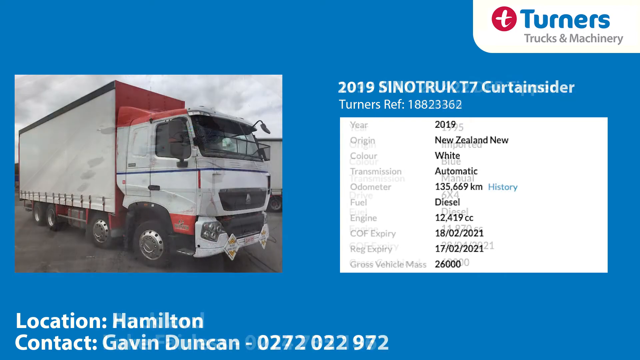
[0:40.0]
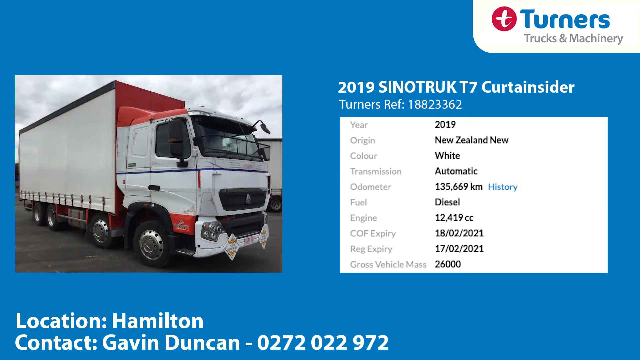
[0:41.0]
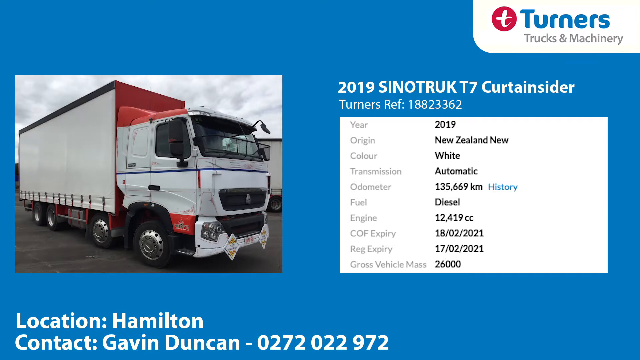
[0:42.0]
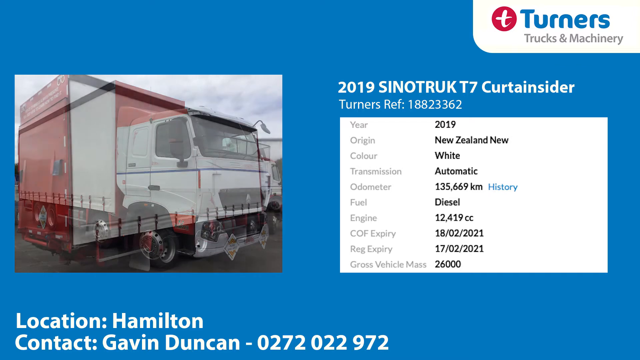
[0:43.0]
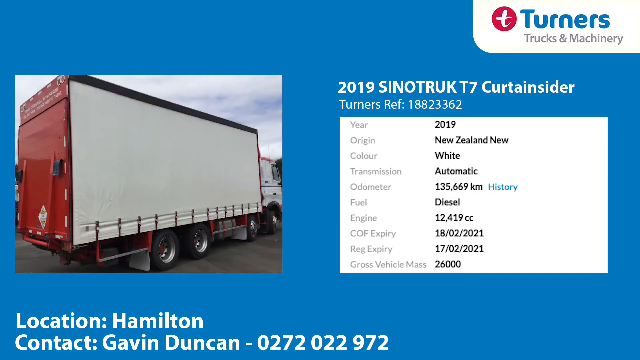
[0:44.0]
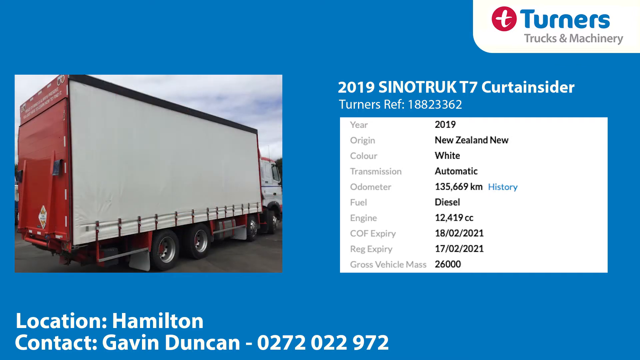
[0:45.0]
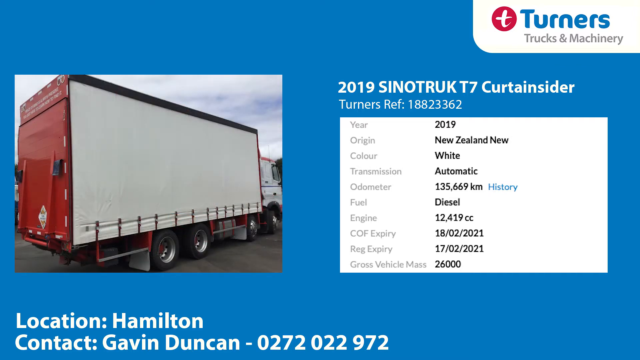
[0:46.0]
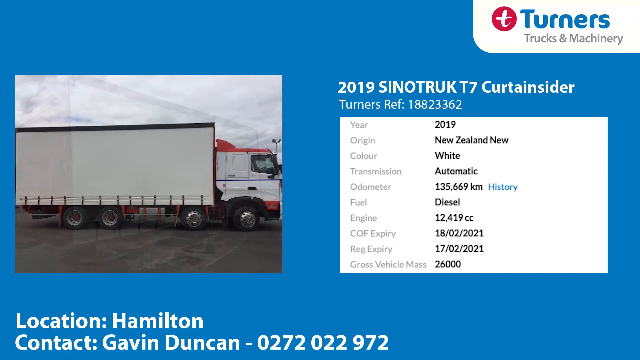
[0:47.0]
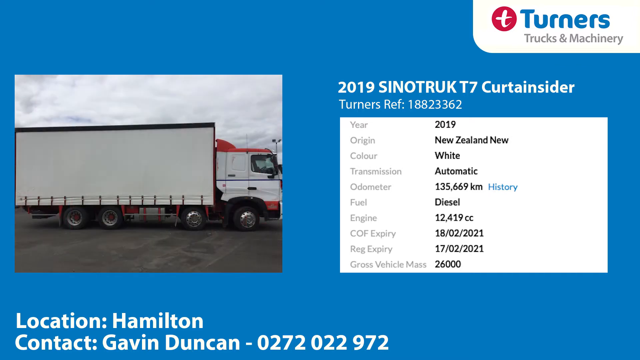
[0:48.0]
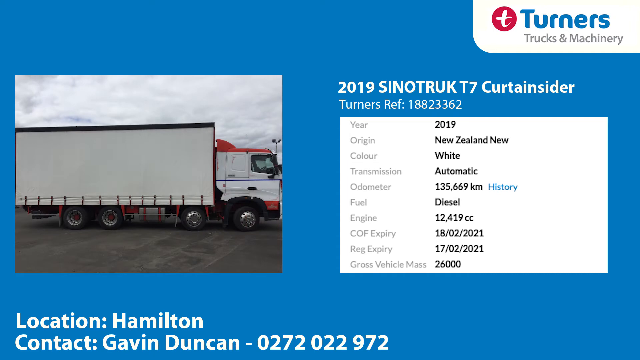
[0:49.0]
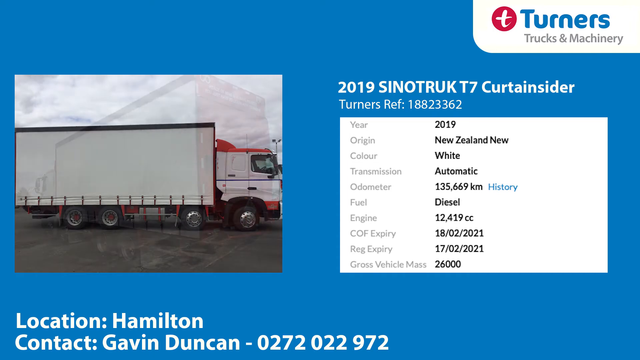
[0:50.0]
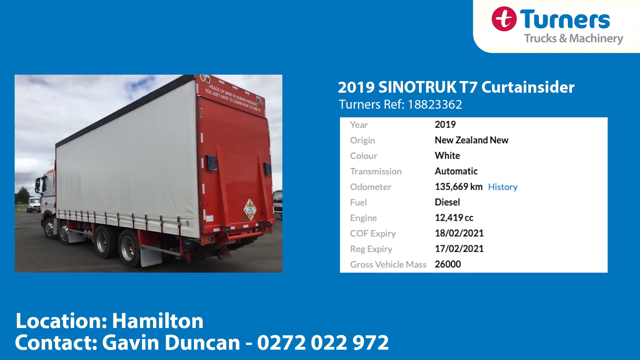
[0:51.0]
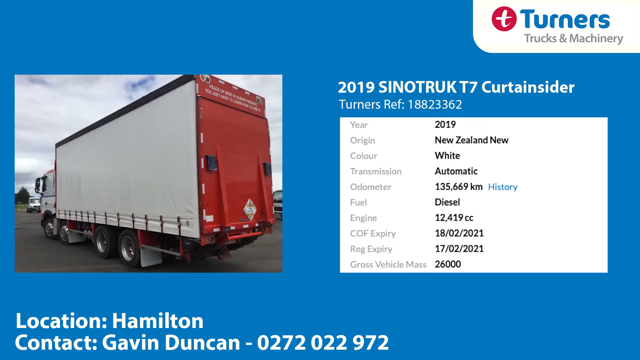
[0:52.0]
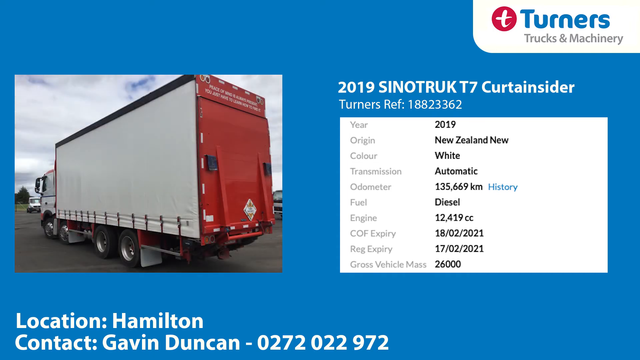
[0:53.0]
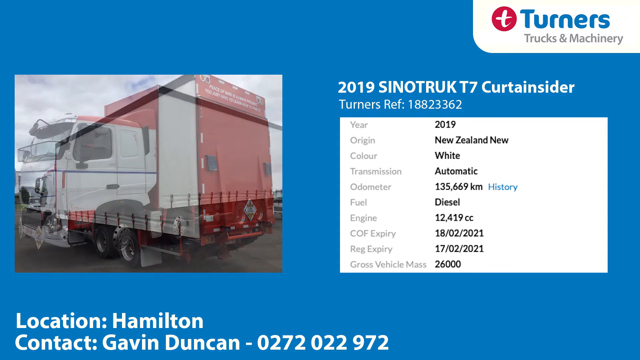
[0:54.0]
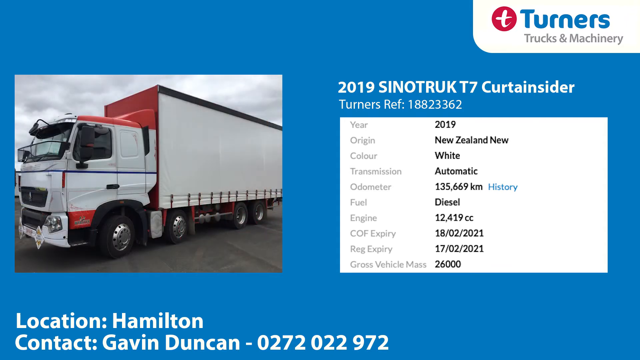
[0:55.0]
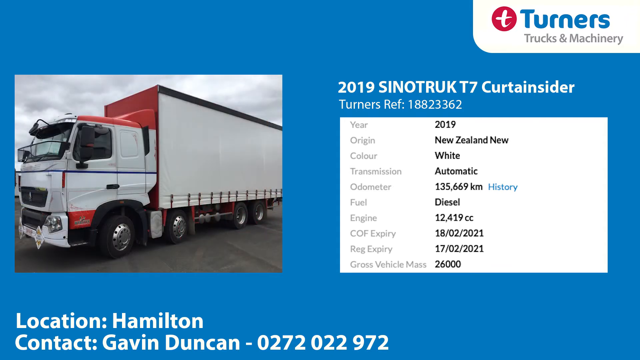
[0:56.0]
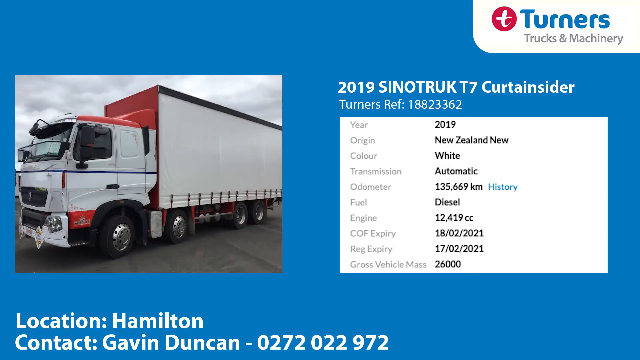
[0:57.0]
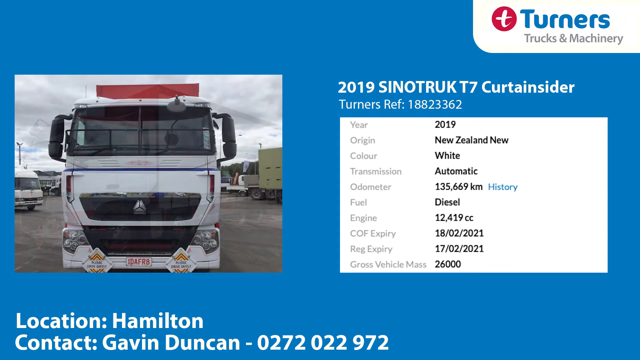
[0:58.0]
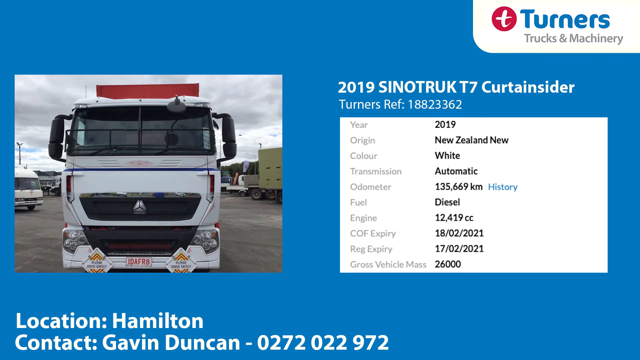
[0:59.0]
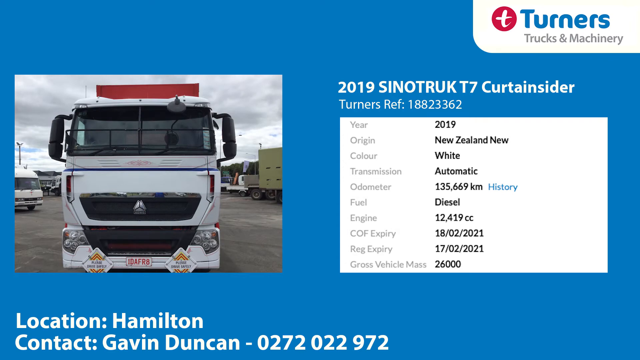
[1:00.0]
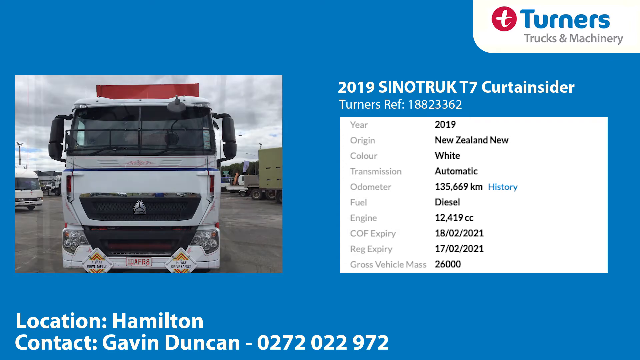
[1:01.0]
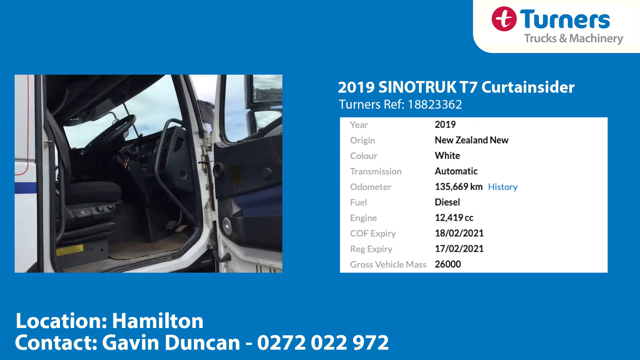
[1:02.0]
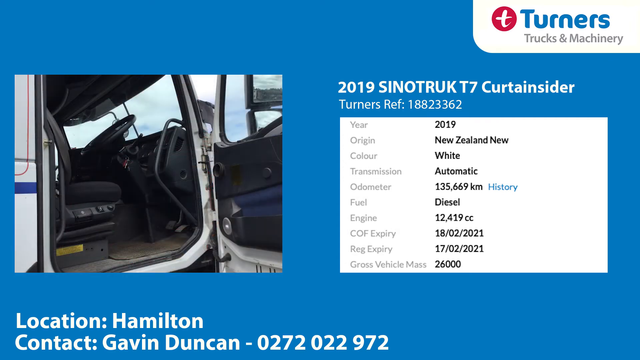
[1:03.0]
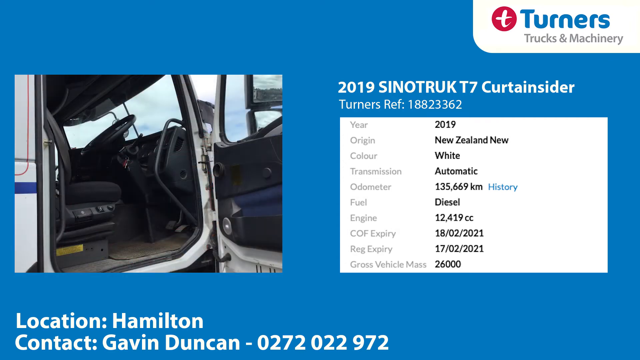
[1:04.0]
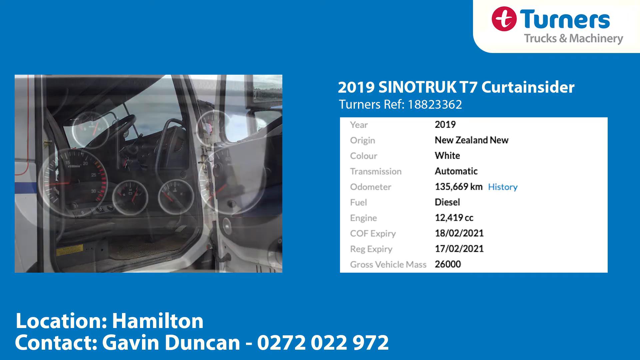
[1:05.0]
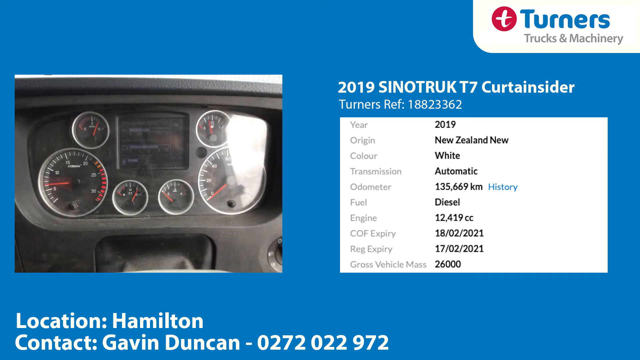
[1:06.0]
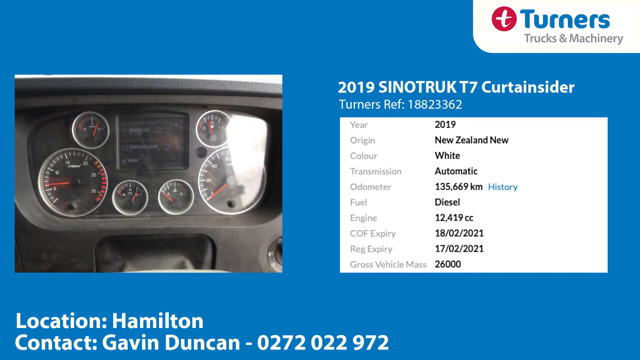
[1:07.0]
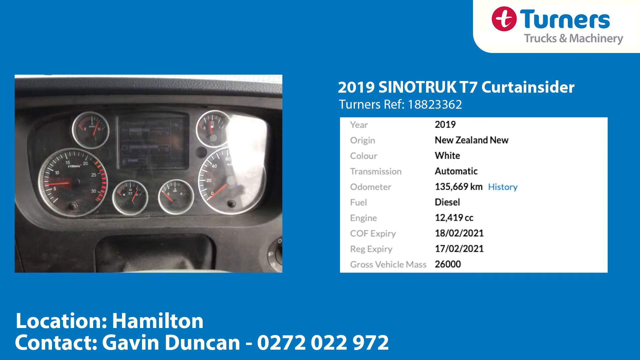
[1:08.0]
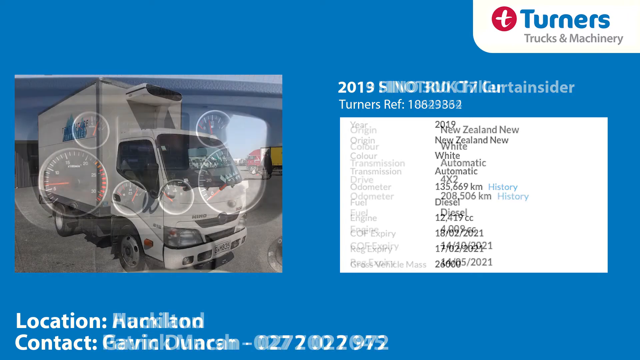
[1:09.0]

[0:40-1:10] More truck images follow, this time of a 2019 Sino truck T7 curtainsider based in Hamilton, with a fabric side. It is a big white truck, automatic and diesel powered. The roof inside the cabin is shown, and the dials in the front are visible. The truck is mainly white, with white down the sides, red colouring on the rear, and red flashing on the front cabin. It is based in Hamilton, New Zealand, the contact is Gavin Duncan, and his number is given on the page.